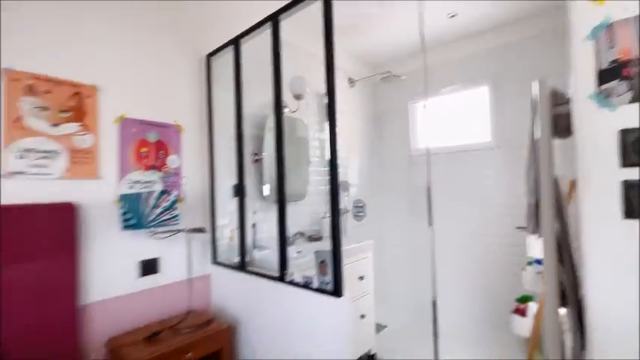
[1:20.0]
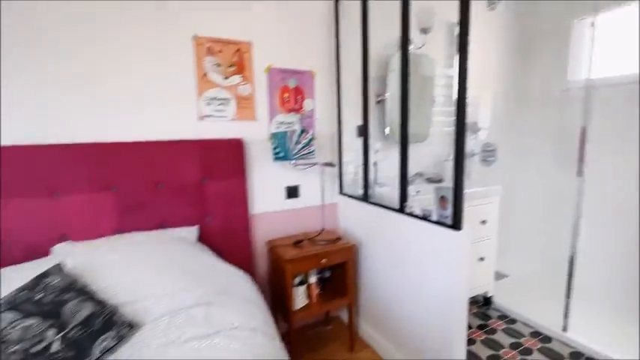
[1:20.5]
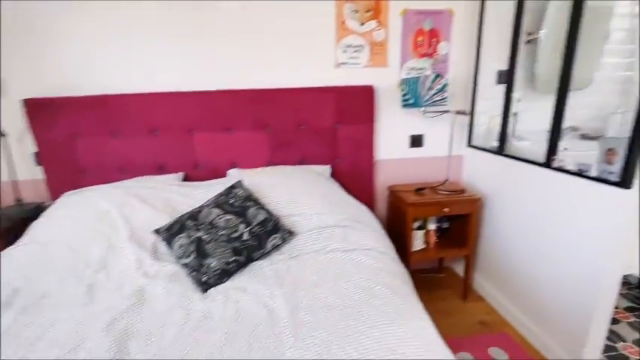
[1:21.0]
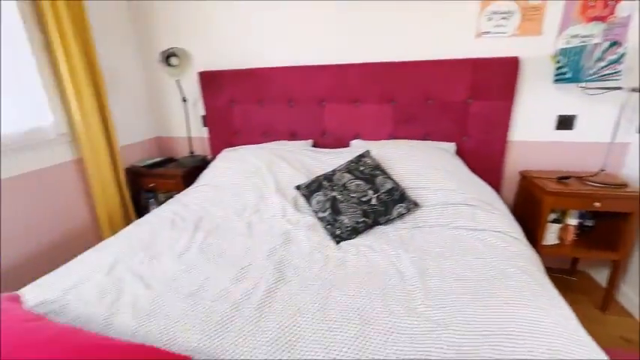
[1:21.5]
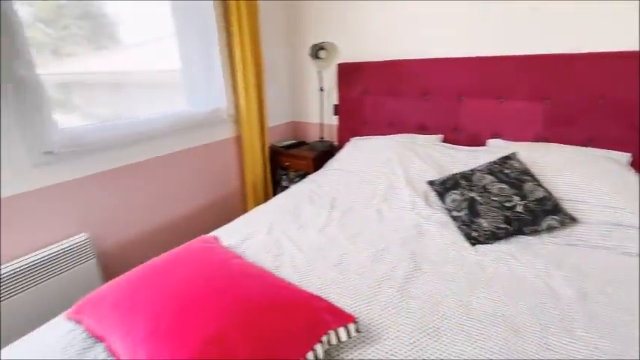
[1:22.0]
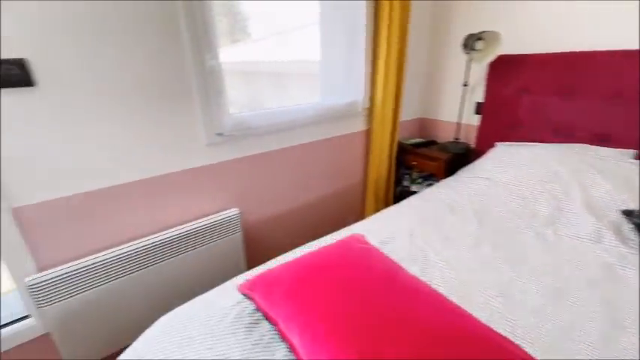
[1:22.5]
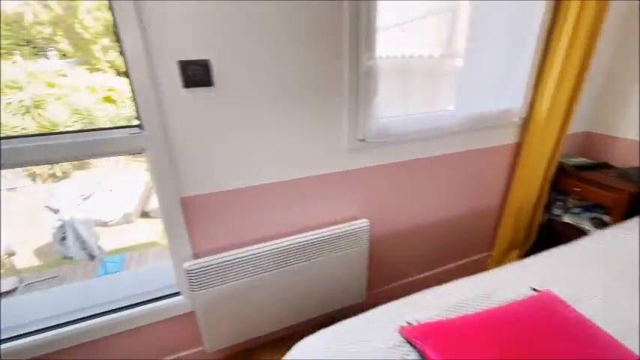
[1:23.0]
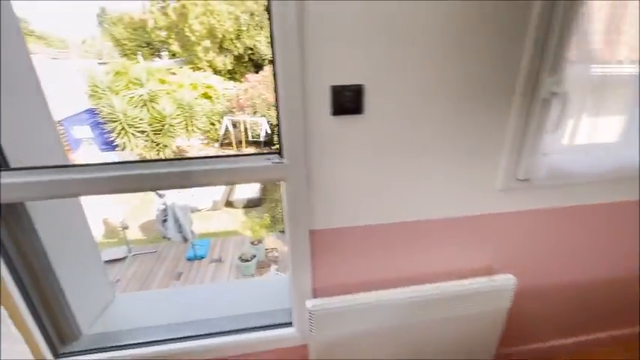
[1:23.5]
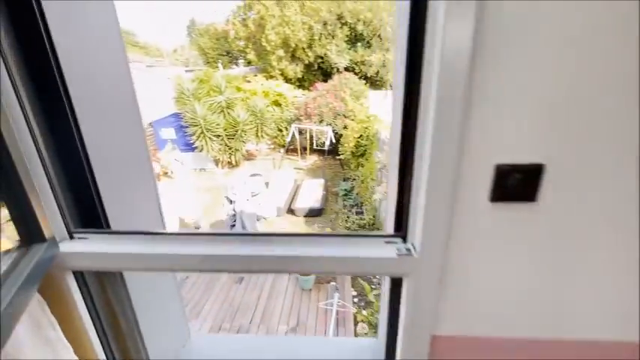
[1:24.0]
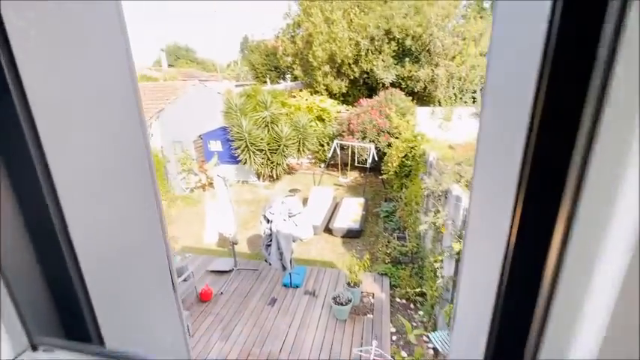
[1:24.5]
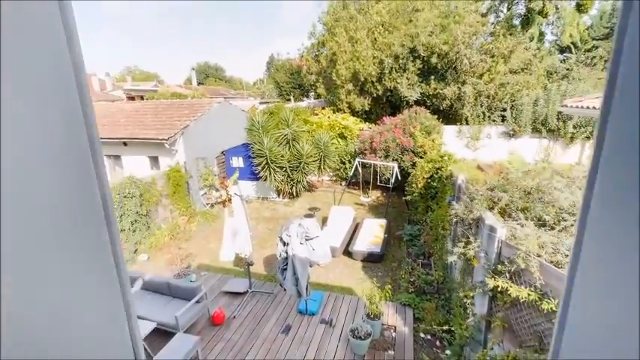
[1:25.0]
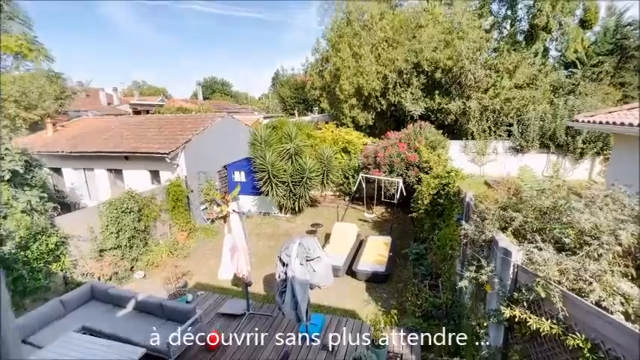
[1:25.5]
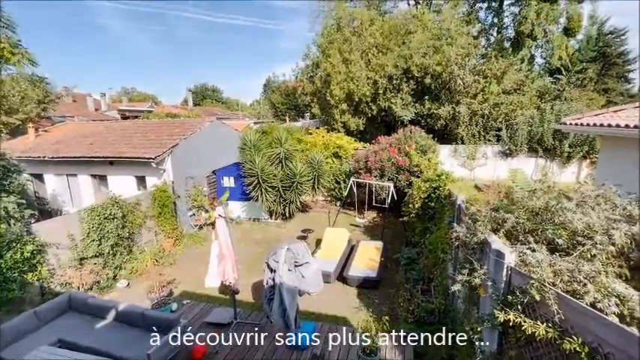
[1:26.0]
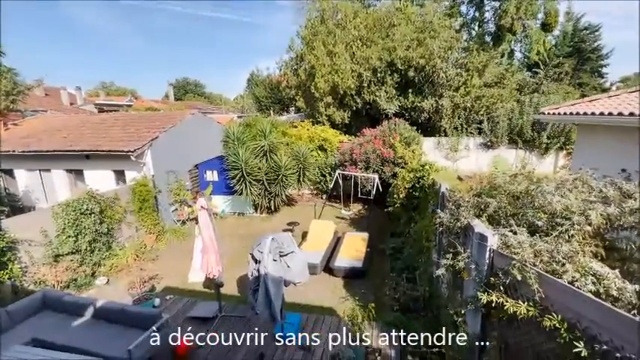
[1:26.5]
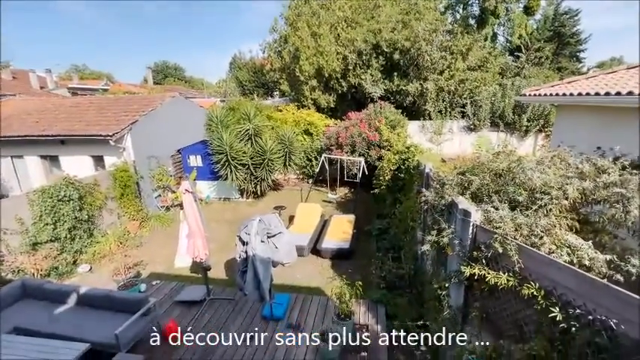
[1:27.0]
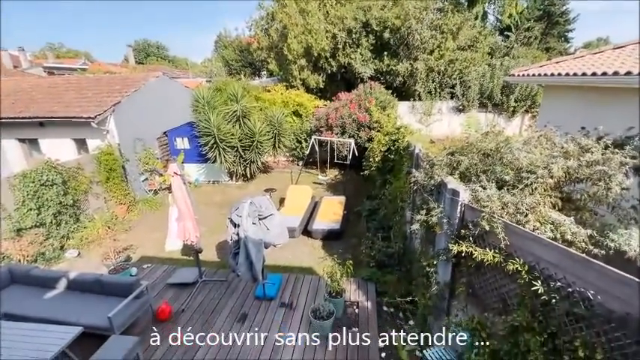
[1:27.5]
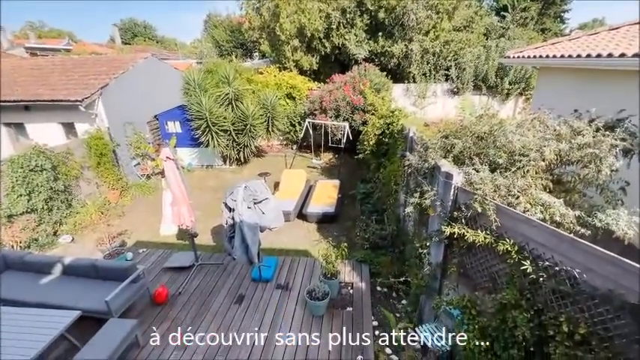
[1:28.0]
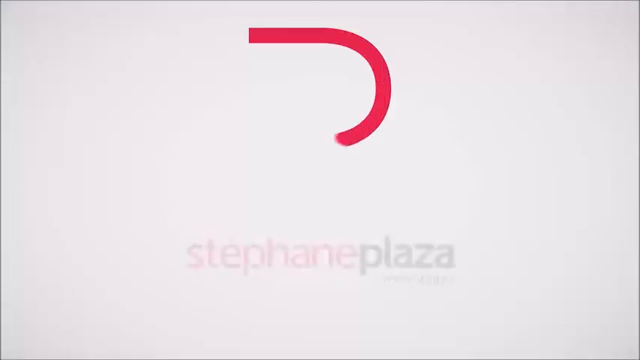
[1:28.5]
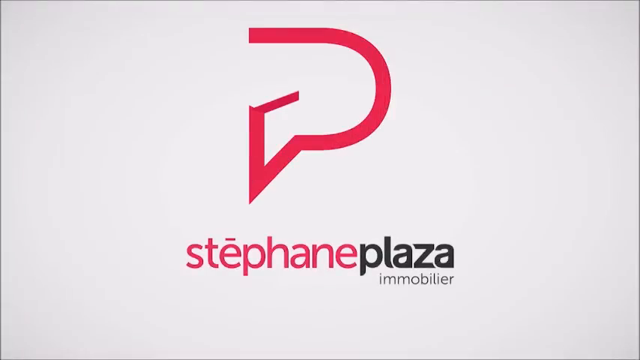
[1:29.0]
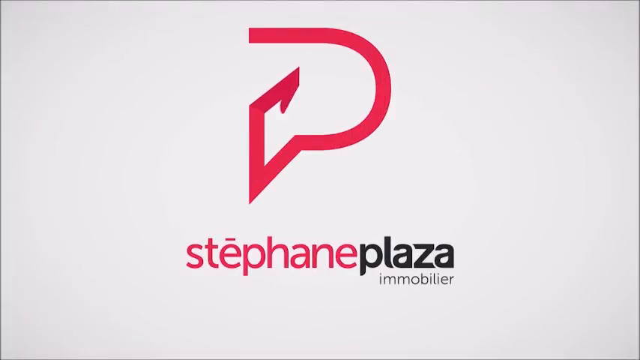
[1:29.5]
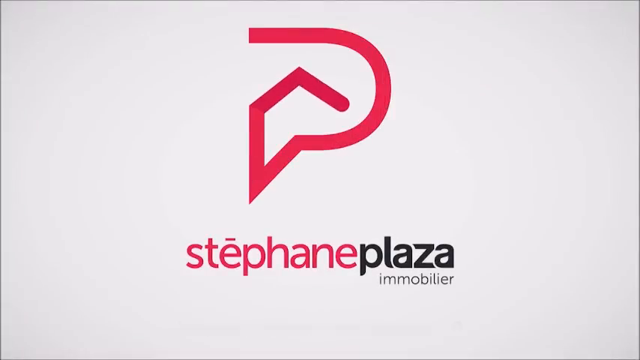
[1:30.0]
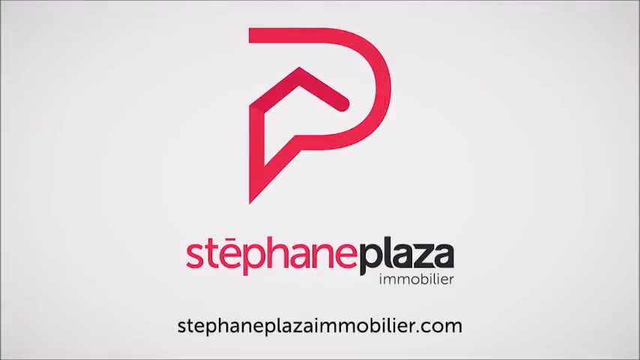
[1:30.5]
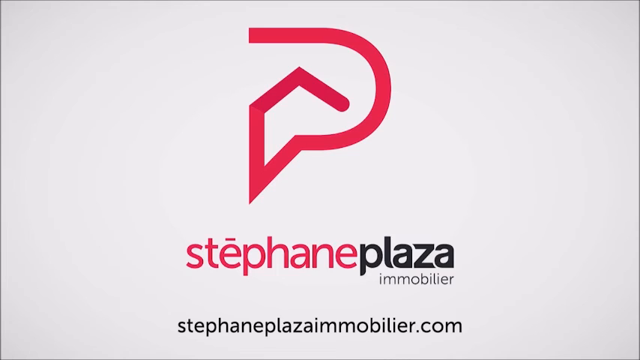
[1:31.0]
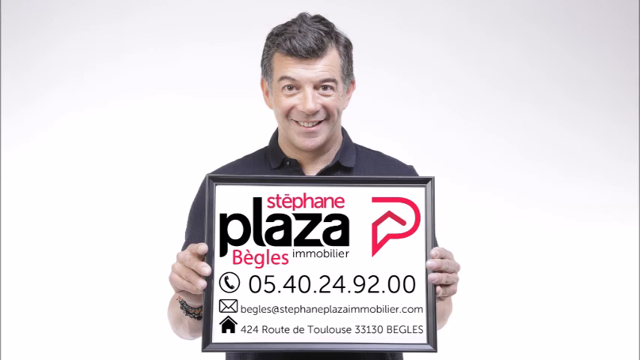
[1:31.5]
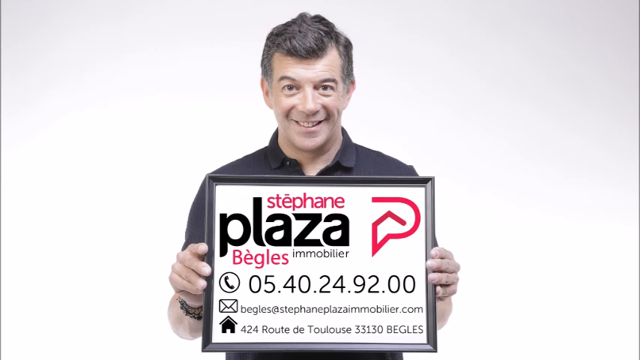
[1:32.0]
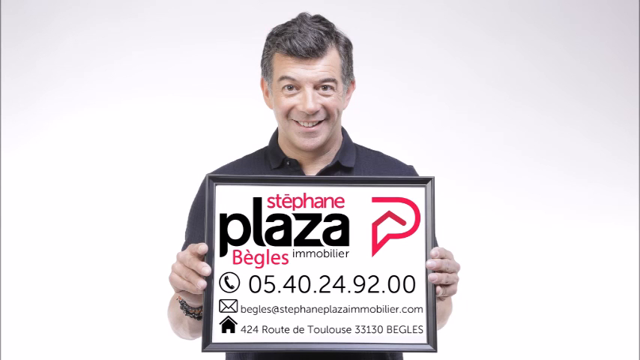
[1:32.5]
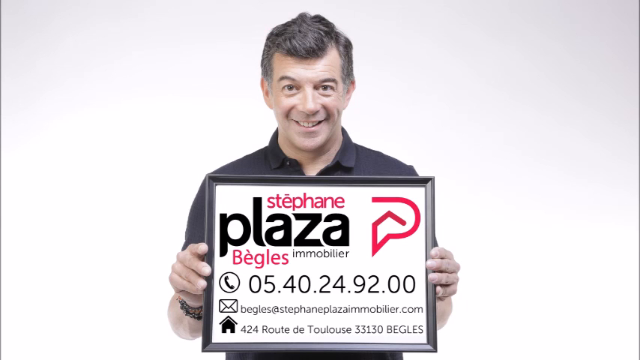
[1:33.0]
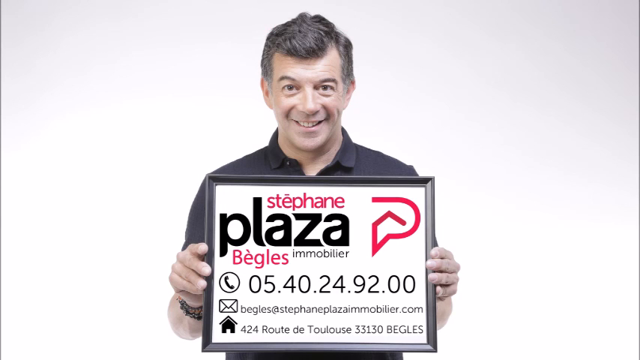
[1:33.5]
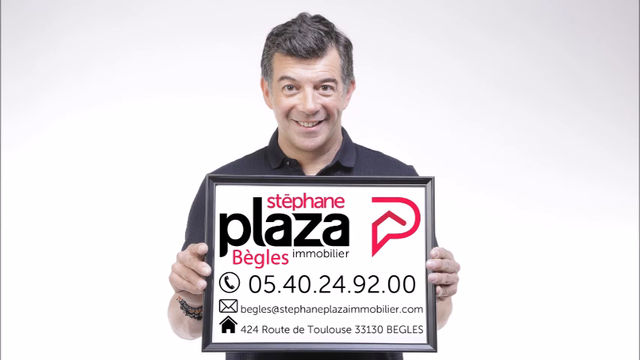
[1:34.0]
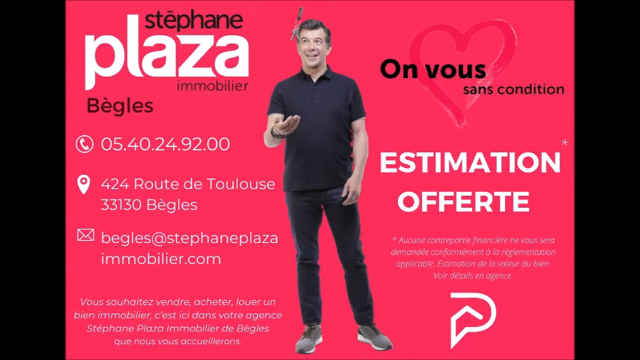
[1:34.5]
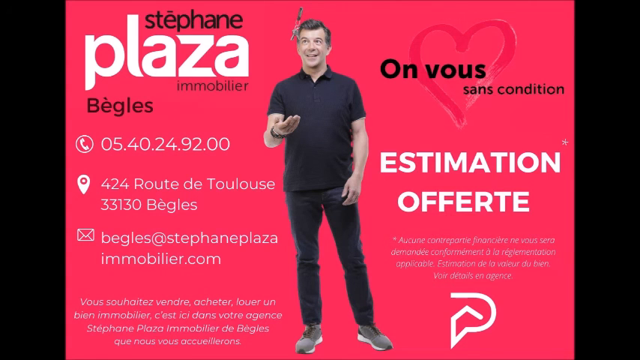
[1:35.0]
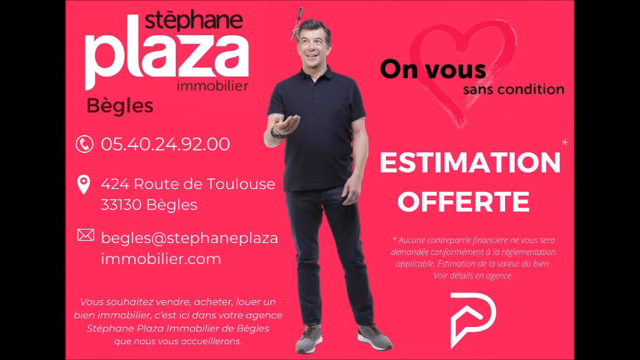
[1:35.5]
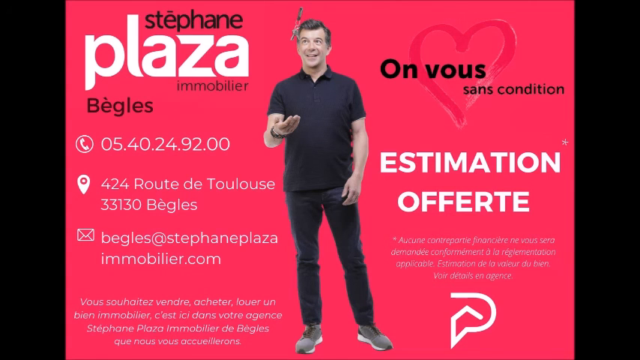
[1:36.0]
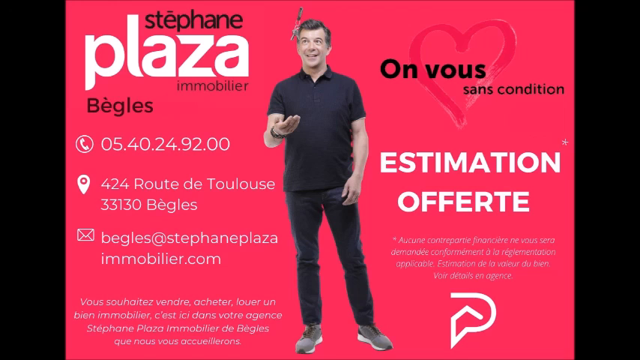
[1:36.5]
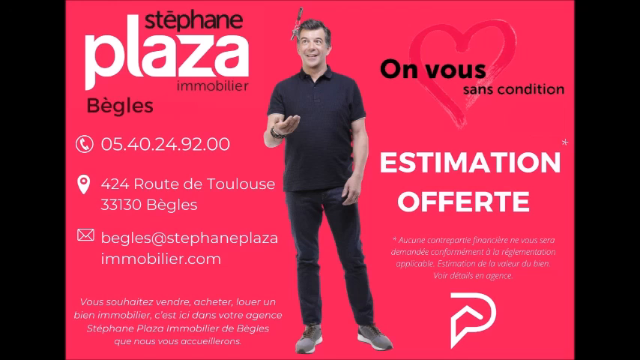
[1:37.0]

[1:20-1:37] The camera backs away from the bathroom and turns left, going across the bed, and looks out the window on the far side of the room. It shows what appears to be the backyard of the house, with the patio area below holding multiple furled umbrellas. On the left side there is a fence overgrown with leaves, and to the right of the fence is another small house. That house does not seem to have any openings on the side of the lawn; they are all to the left, beyond the fence. It is a small one-story house. Toward the right there are trees, bushes, and a swing set within the lawn, and further right many bushes overgrow the rest of the area. The image then fades to white and shows a logo with text in a foreign language. The logo appears to be a stylized P that is drawn in from the top and then to the right. The video goes back to the image of the man holding a sign with the company's contact information. Then another graphic shows the man throwing a key in the air, with more text in a foreign language.